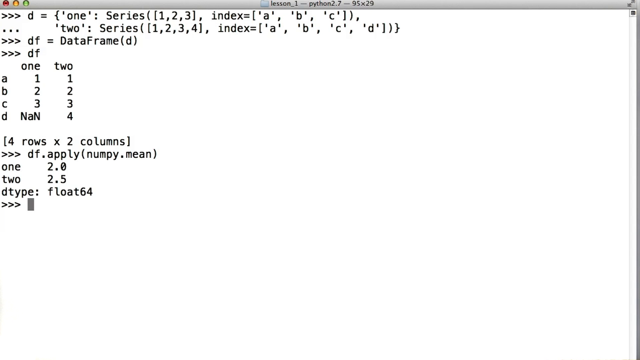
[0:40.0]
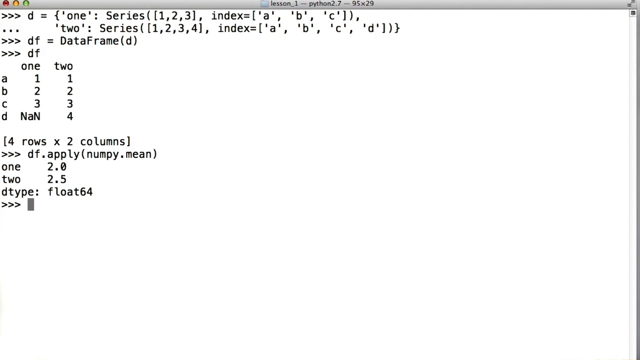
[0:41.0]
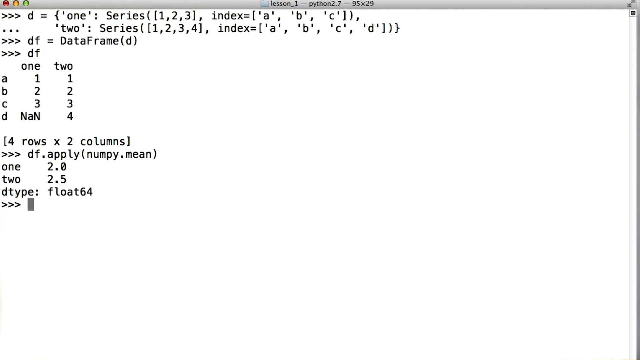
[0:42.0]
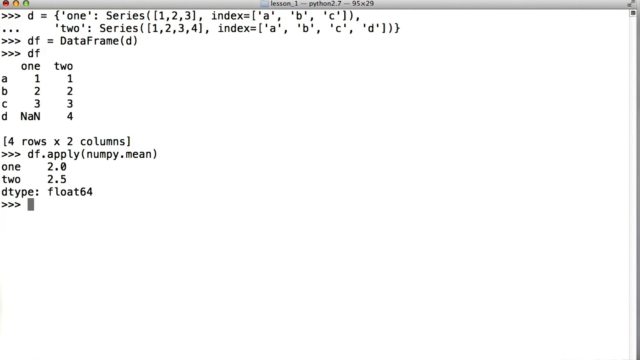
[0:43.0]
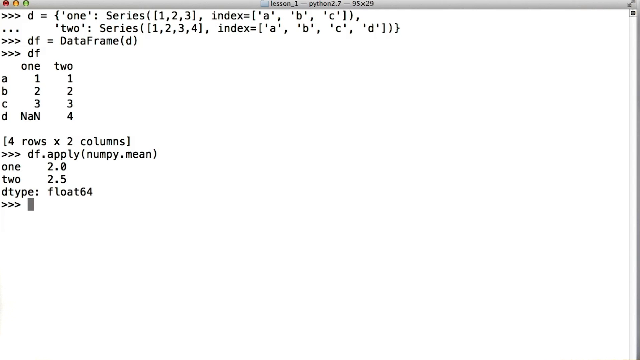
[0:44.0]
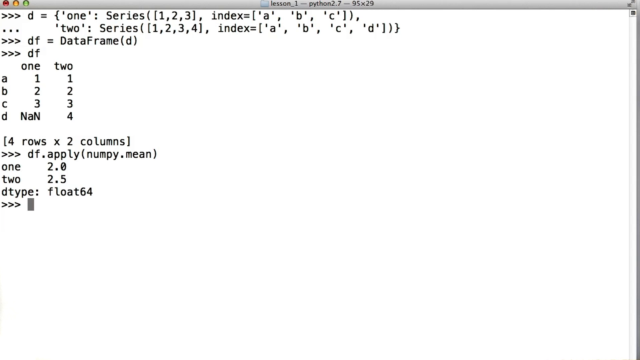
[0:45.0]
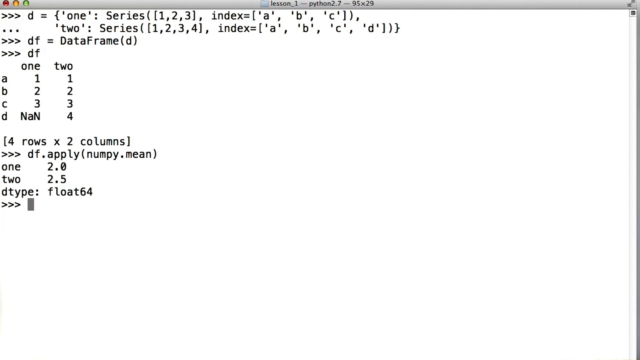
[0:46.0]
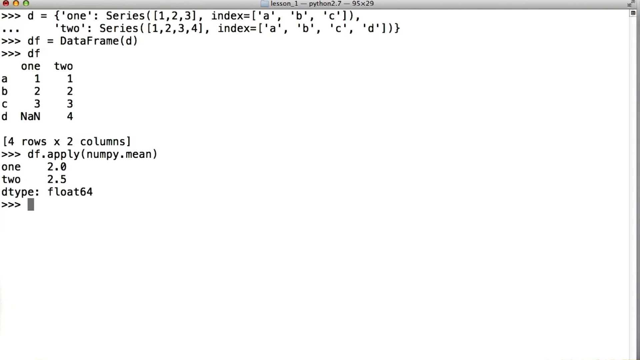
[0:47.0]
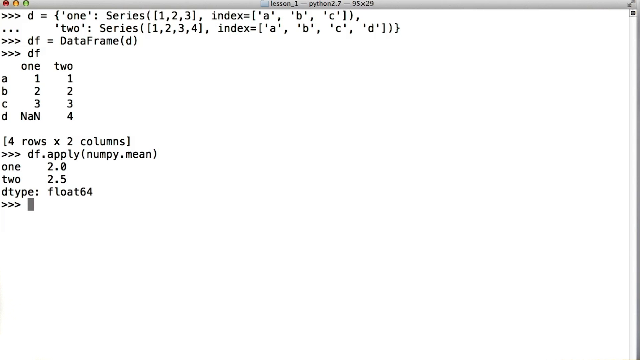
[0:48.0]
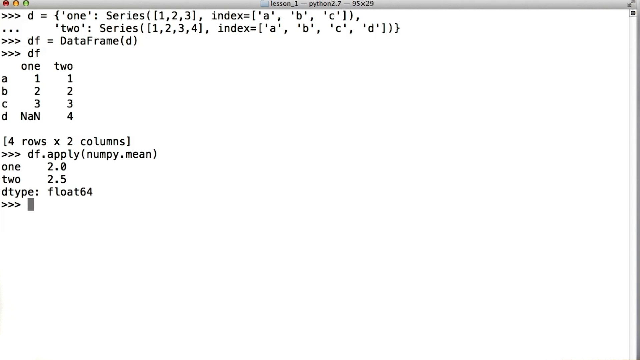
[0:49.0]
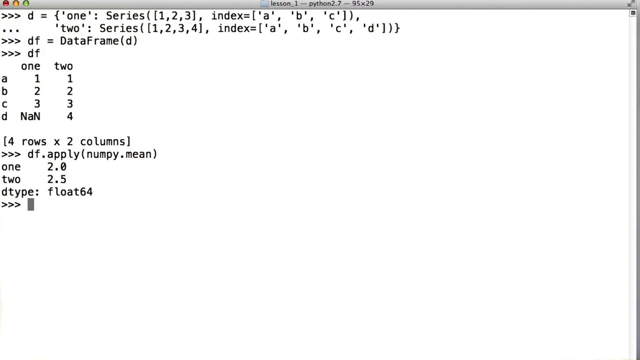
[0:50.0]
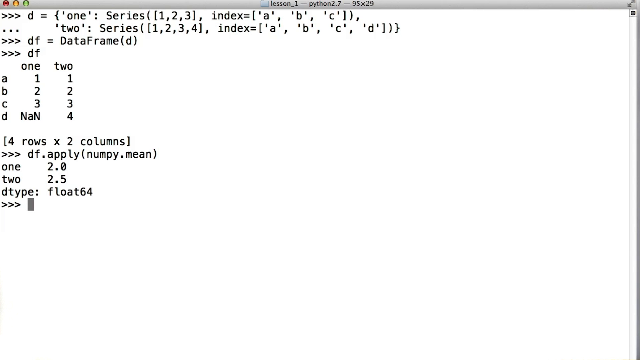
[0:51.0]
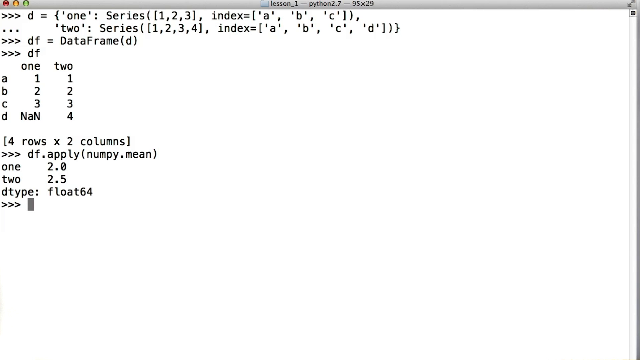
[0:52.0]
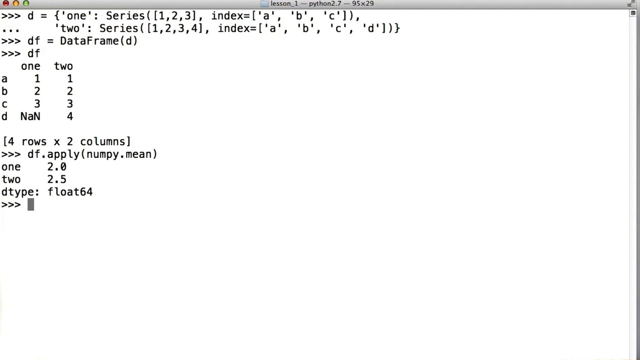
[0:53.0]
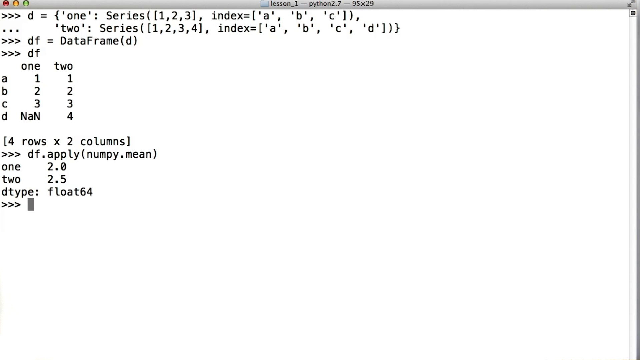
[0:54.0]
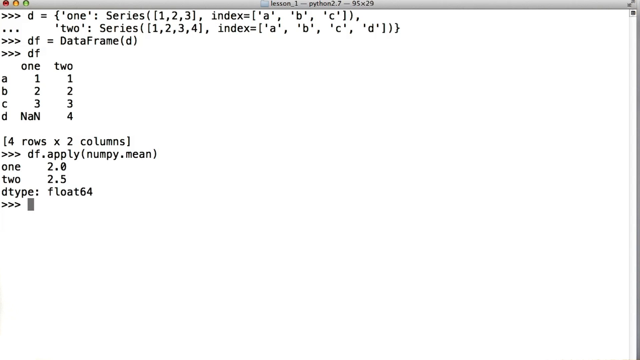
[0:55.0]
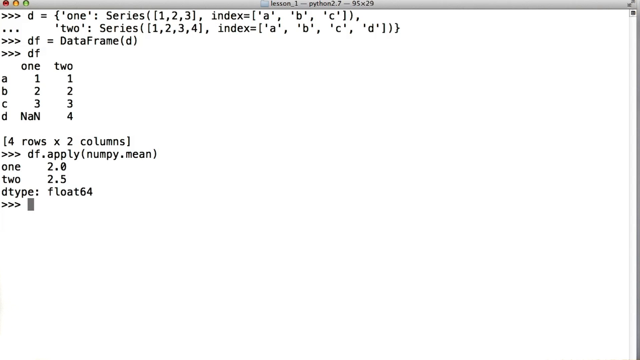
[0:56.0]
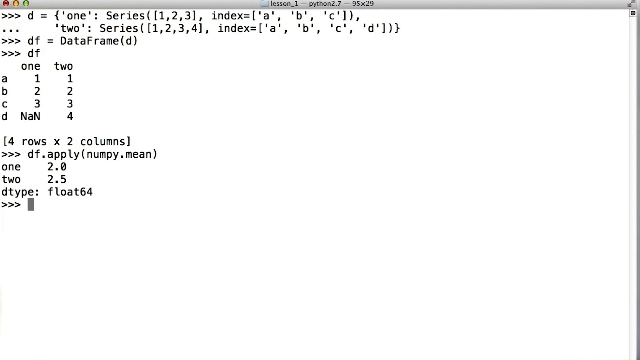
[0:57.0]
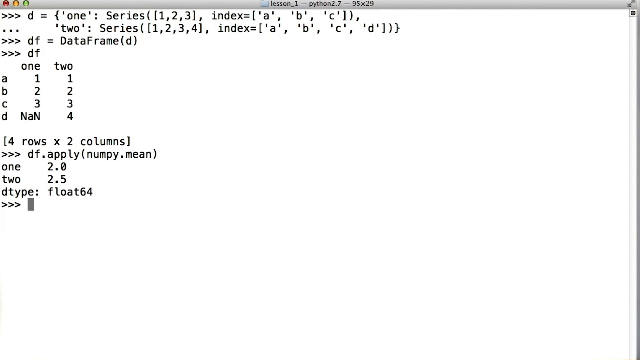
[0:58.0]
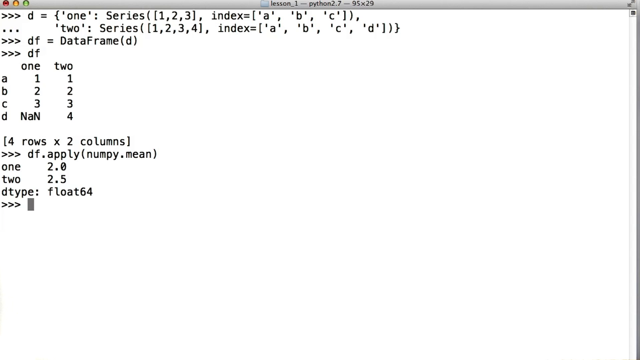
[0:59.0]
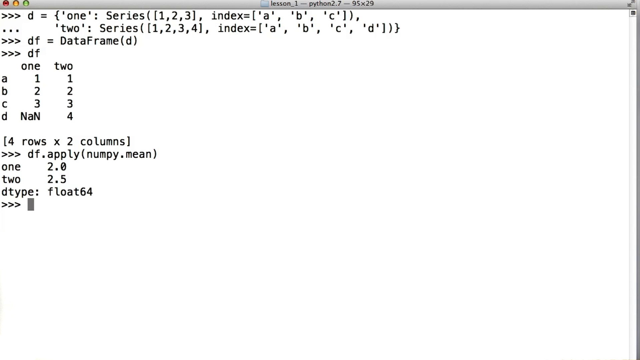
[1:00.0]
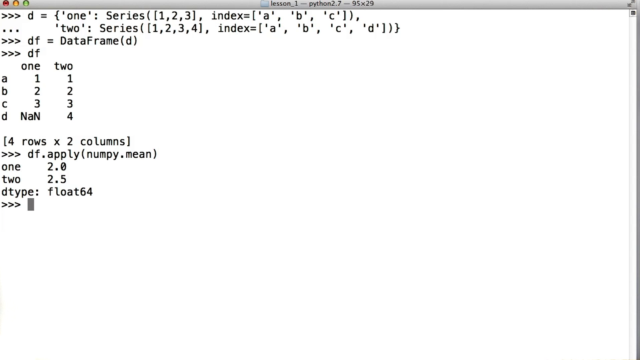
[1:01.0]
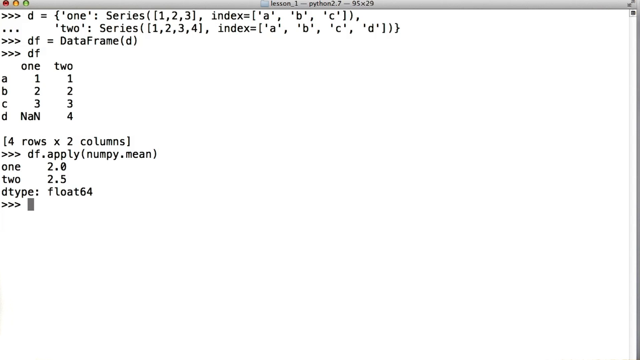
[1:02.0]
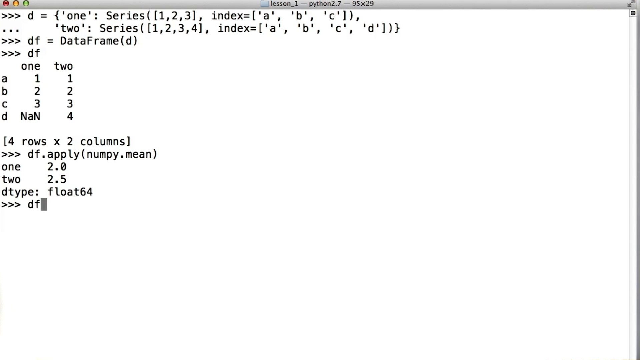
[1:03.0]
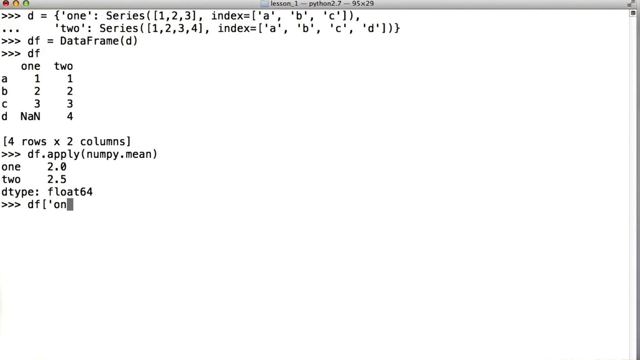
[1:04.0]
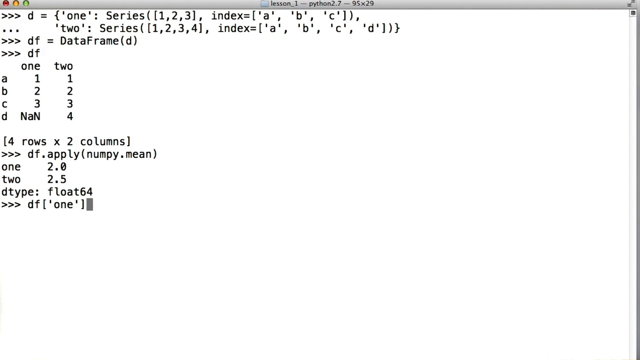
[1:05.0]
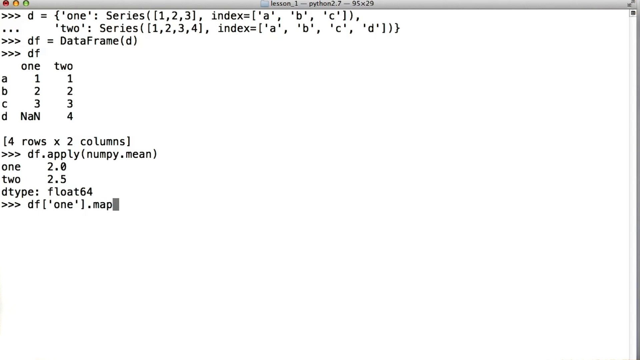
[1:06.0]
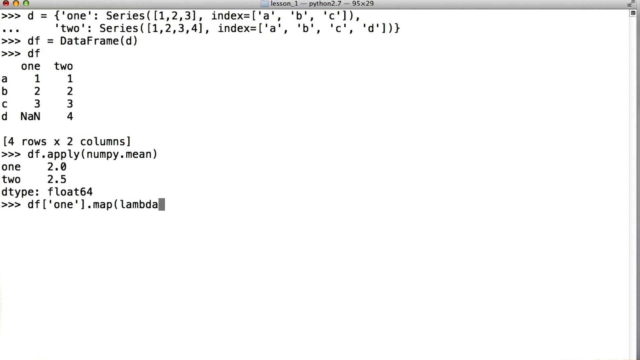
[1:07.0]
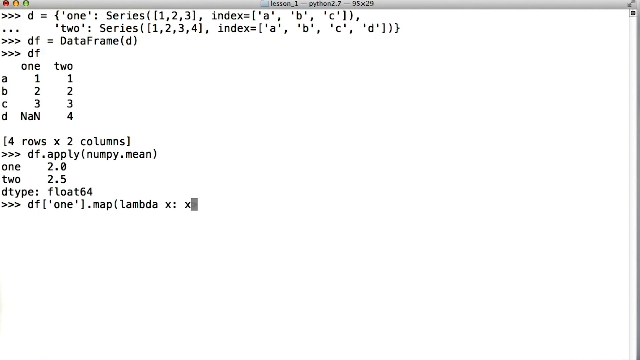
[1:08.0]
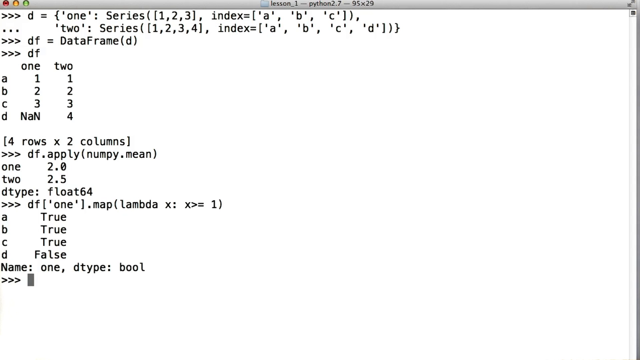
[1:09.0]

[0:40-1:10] The page stays idle for a while, as the teacher or person making the video is probably talking to his students. He then writes new code beginning with three greater-than symbols, followed by df with brackets, colons, ".map" and a greater-than-or-equal-to one condition. The output shows a True, b True, c True and d False, with name 1 and dtype "bool". He continues writing more code. The page remains white, with three red, yellow and green markers that probably mean close.